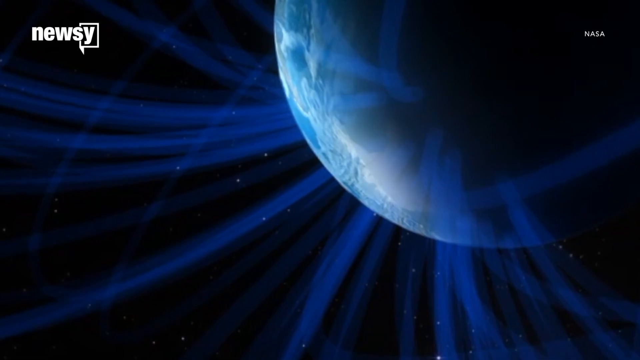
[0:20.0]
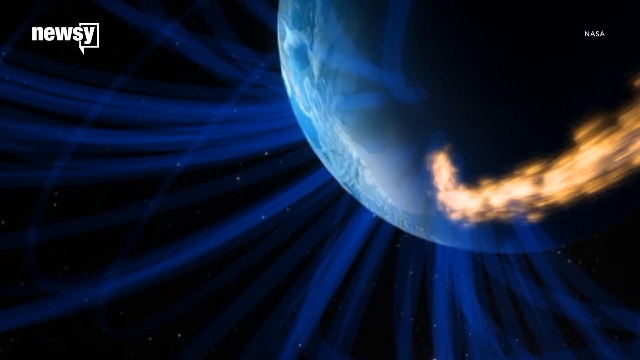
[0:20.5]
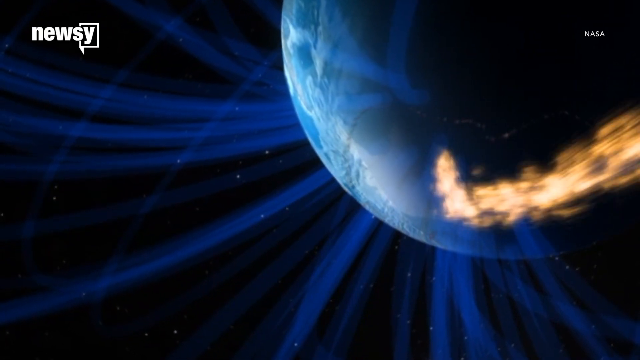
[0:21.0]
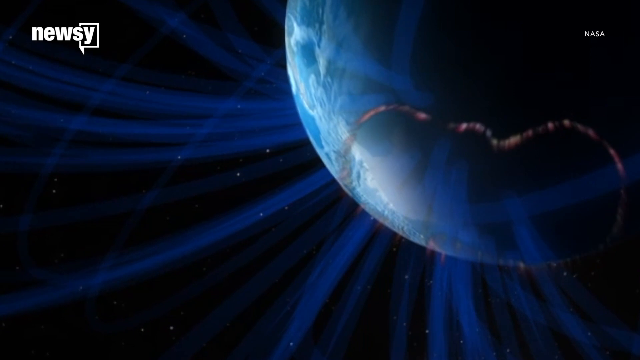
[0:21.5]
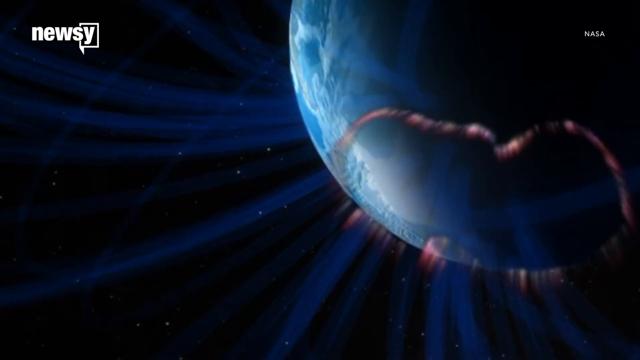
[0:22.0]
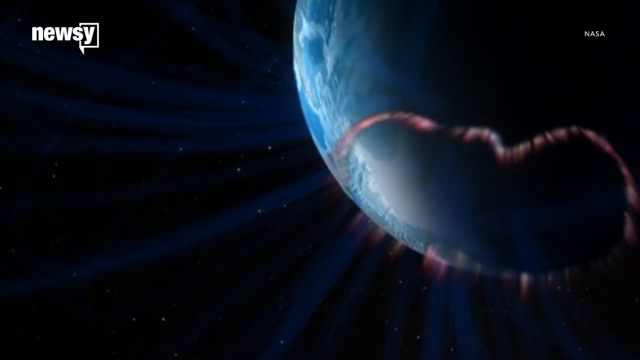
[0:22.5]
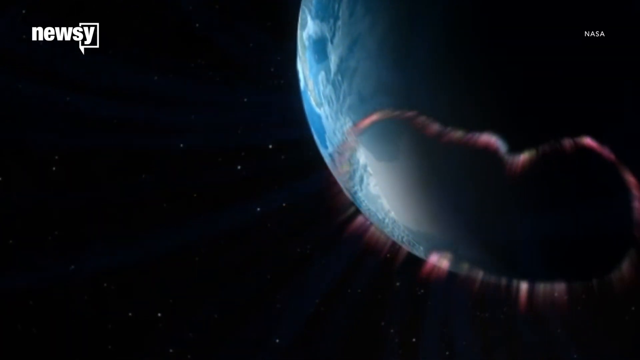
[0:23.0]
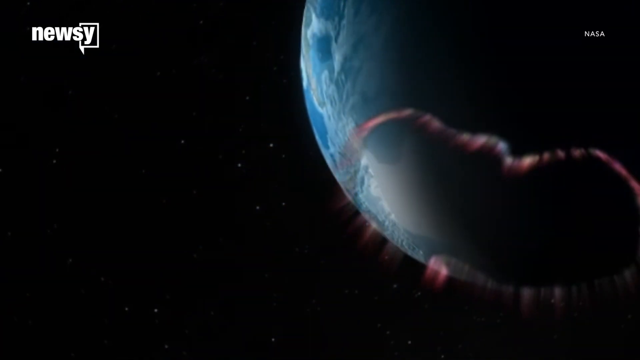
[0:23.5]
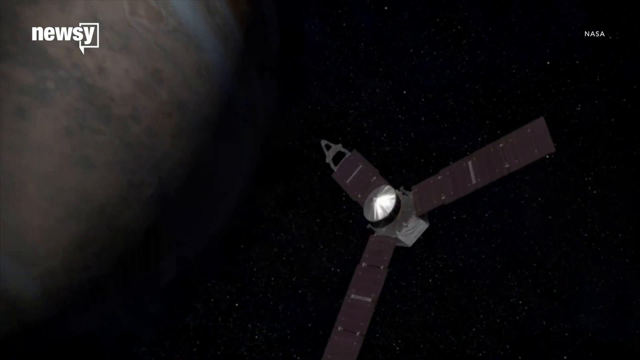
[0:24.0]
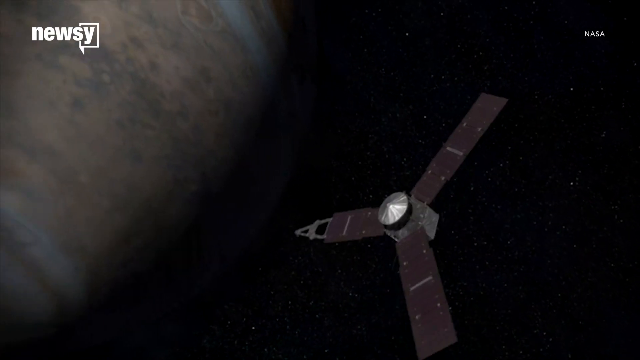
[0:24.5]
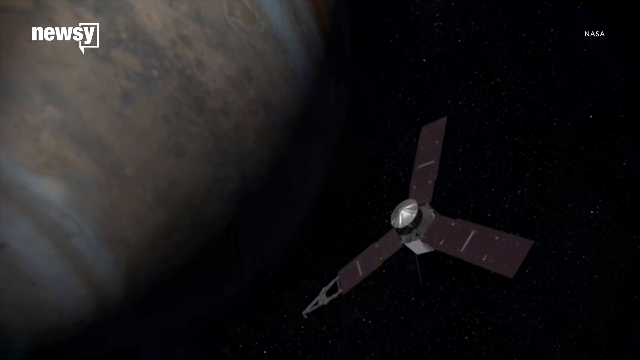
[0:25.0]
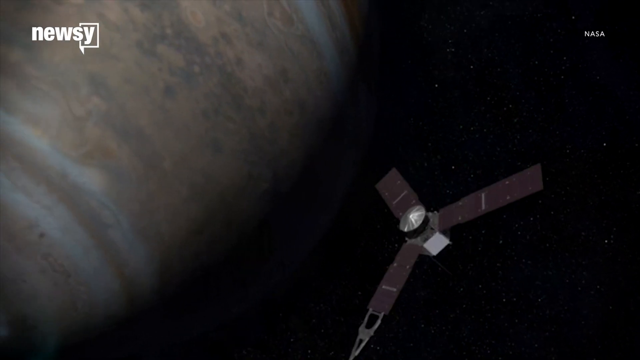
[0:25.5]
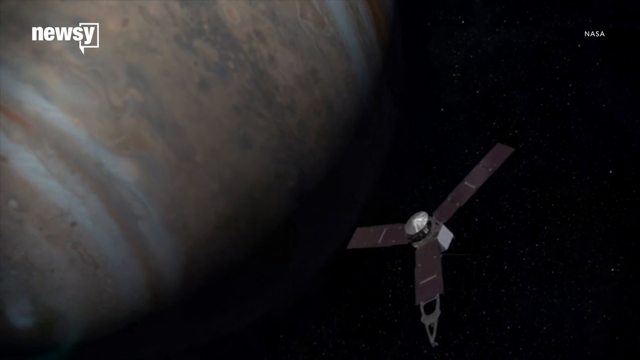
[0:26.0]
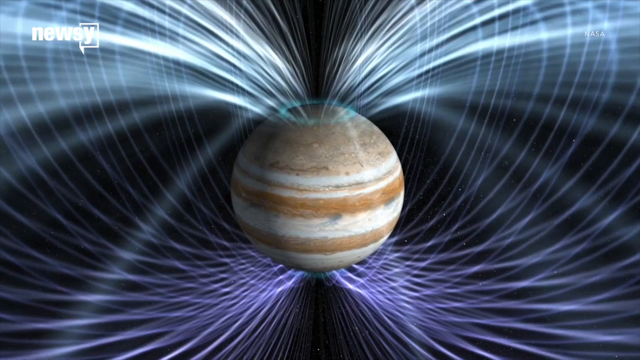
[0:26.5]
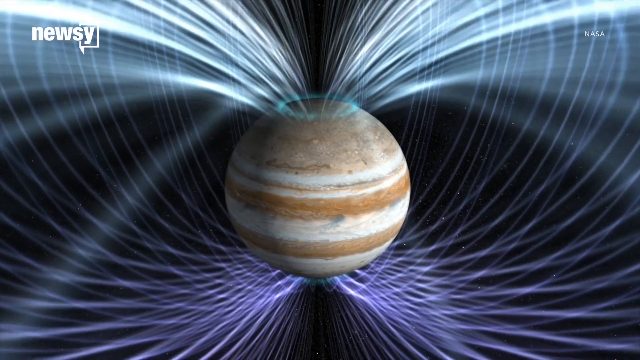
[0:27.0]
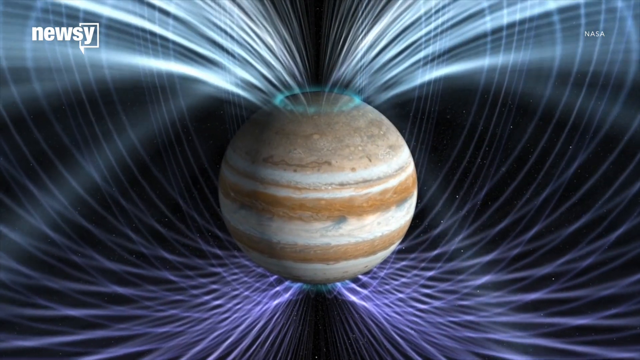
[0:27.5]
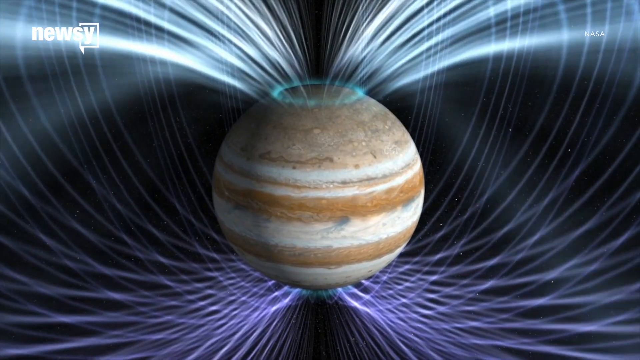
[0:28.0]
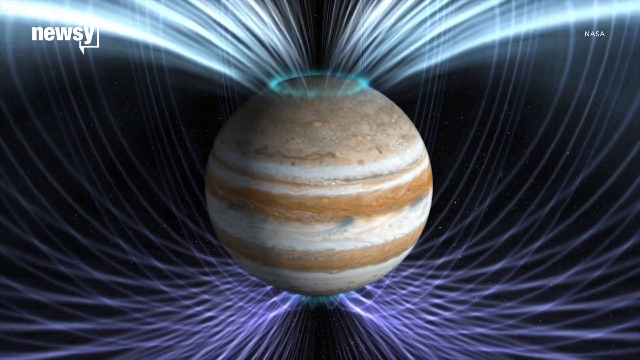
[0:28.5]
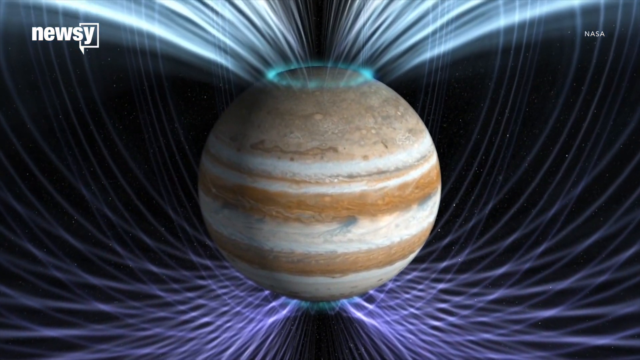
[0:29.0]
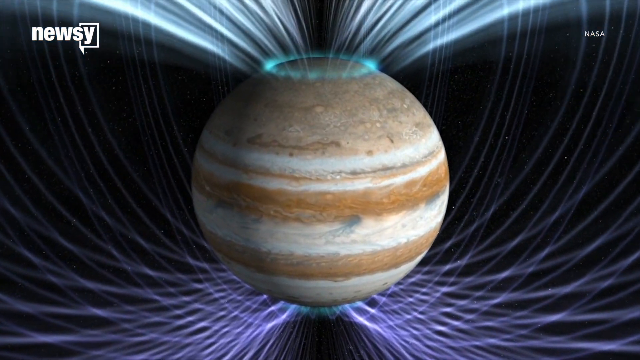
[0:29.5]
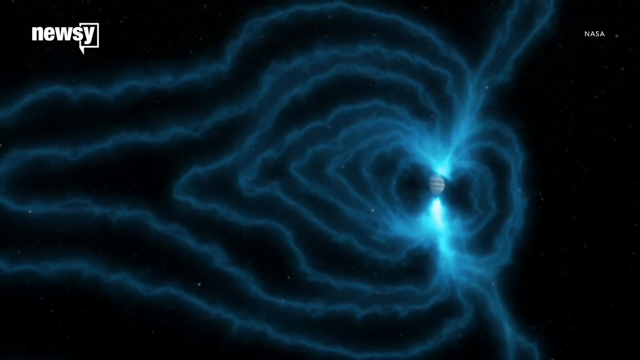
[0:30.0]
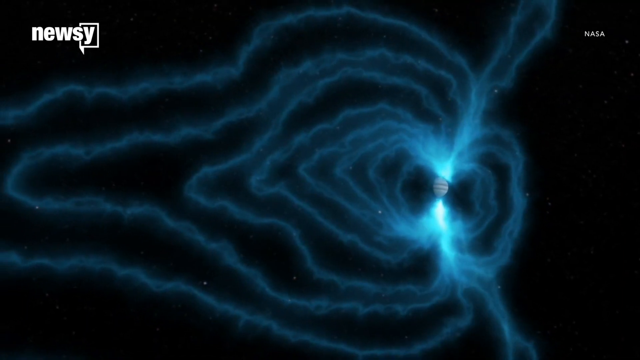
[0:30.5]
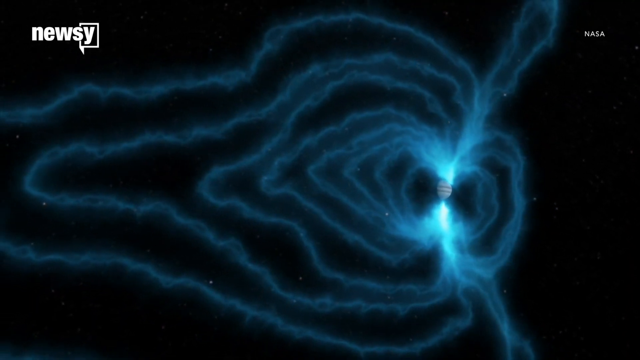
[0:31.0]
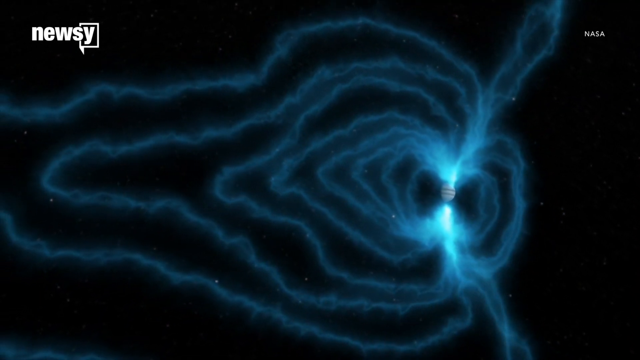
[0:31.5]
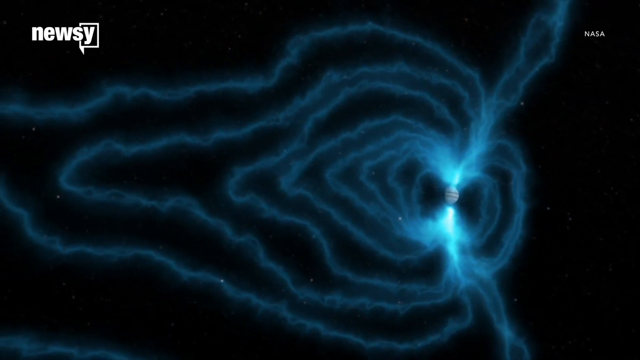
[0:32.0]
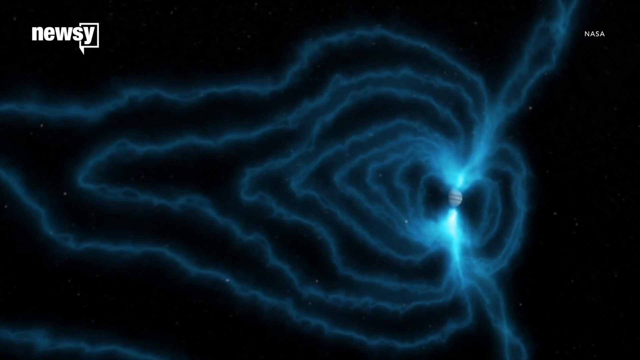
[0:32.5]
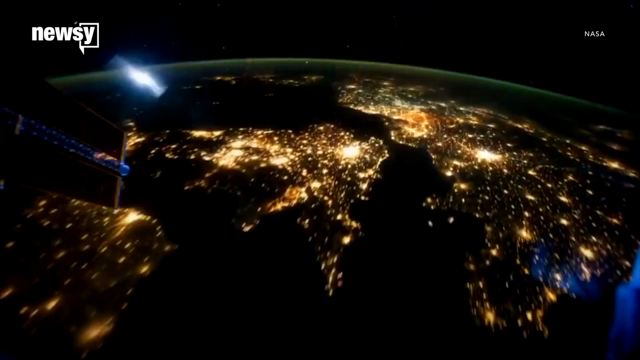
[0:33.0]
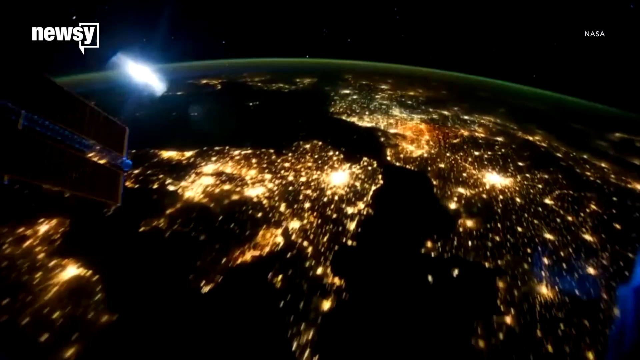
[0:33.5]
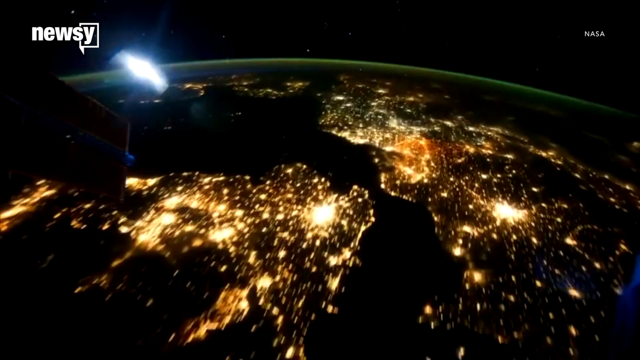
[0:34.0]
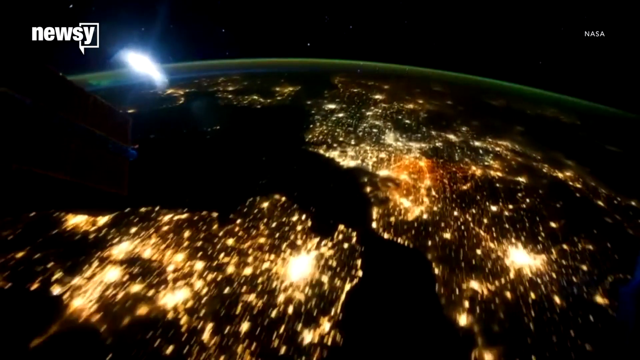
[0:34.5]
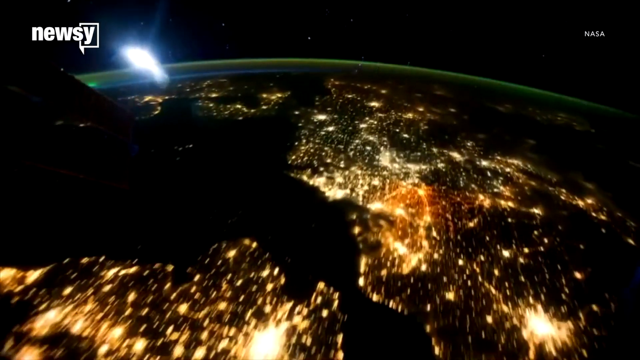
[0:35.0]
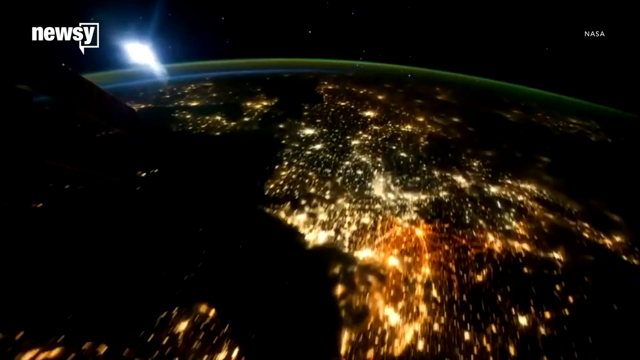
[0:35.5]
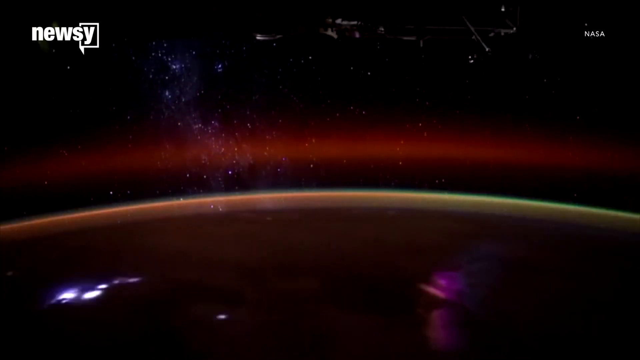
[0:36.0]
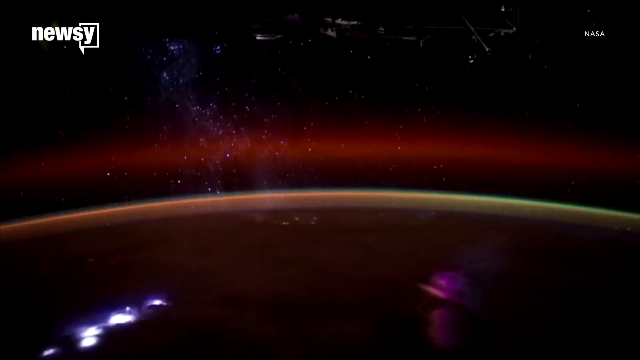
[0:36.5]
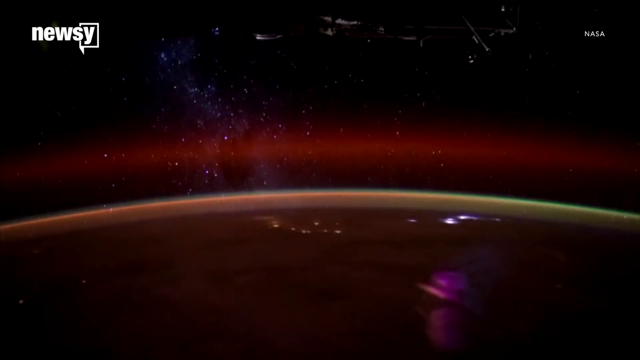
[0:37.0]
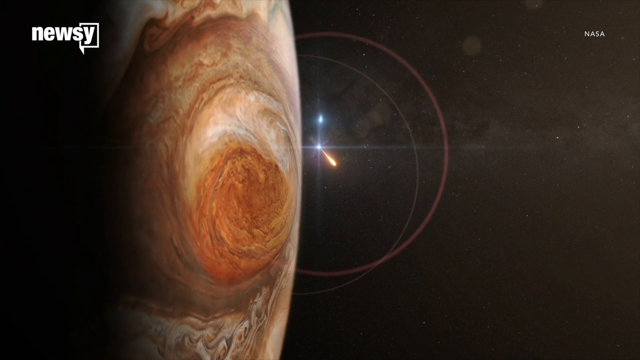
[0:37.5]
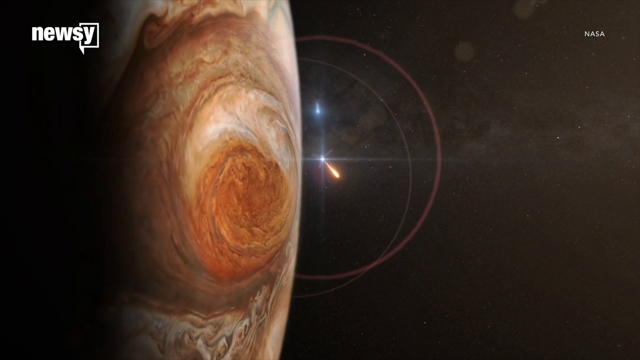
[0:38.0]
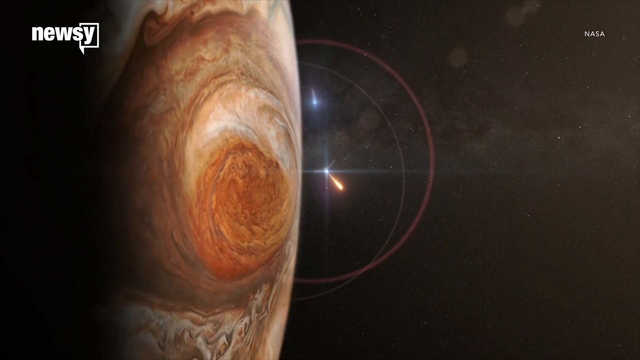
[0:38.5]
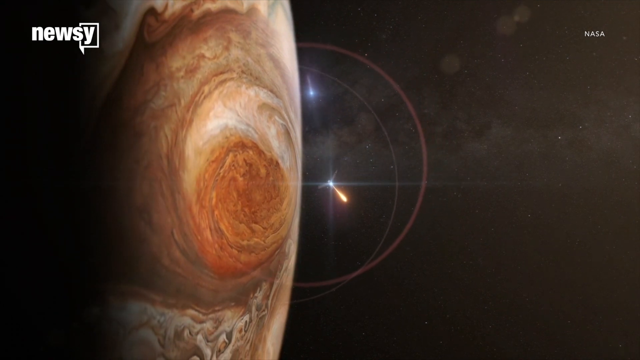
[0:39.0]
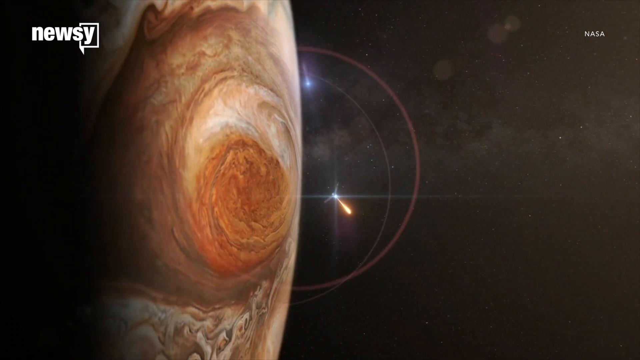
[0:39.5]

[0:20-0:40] Something moves, and it seems that fire is coming toward the planet; it is unclear whether this is a space shuttle or some kind of space tool. The planet reflects a lot of light, and a lot of gases are visible. There is another thing that looks like a mix of different colors, and the colors seem to be fire or something similar, though this is uncertain. The planet seems very colorful and reflects a lot of light from its body.